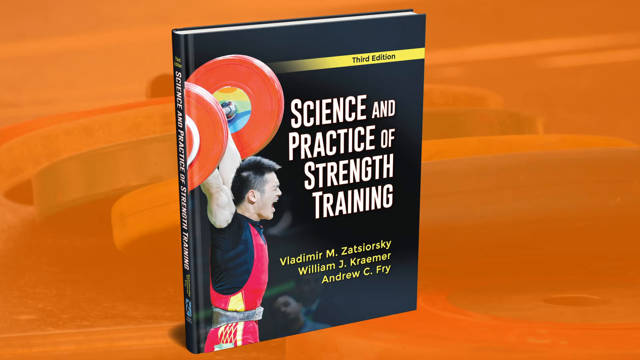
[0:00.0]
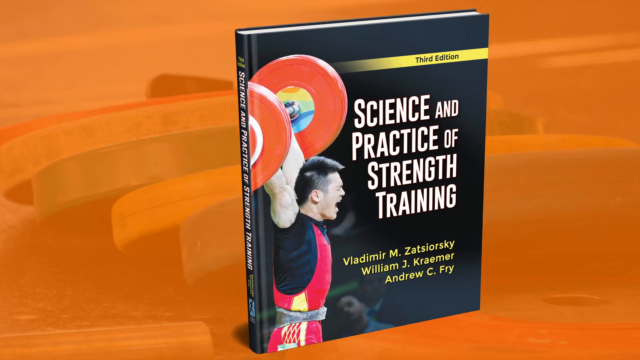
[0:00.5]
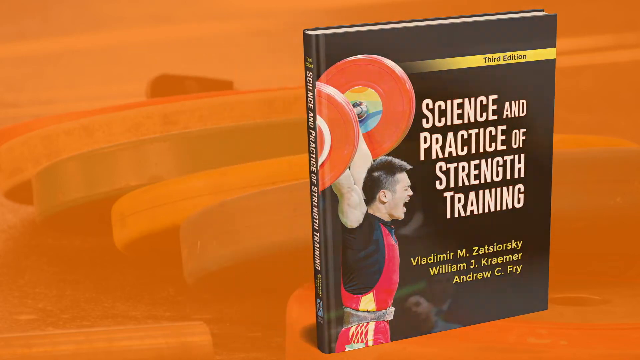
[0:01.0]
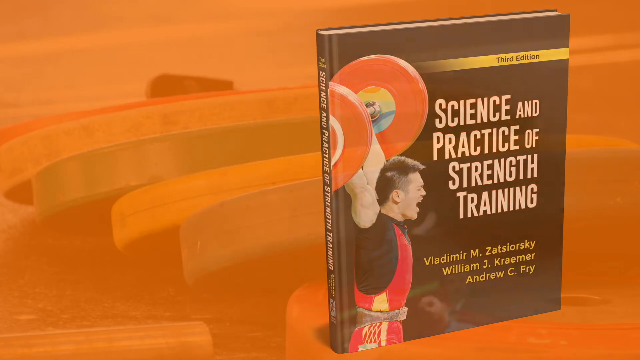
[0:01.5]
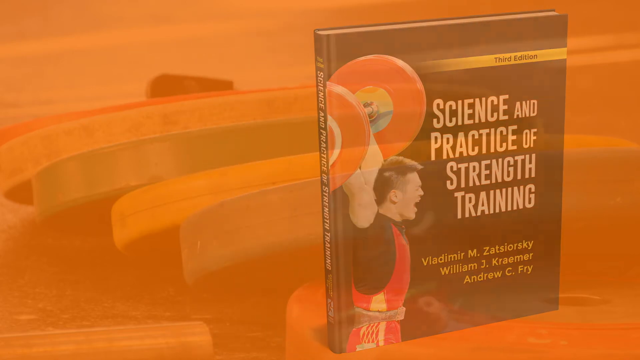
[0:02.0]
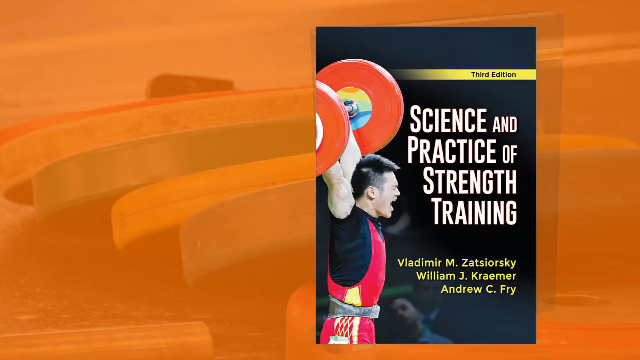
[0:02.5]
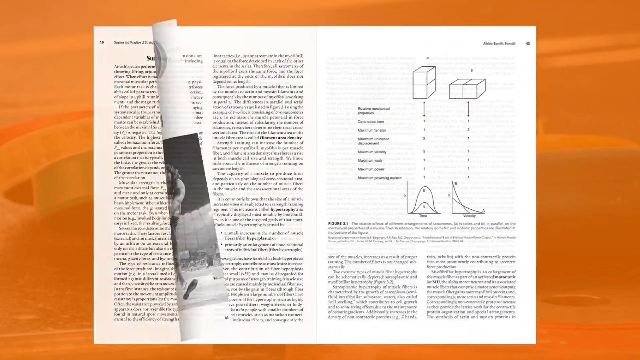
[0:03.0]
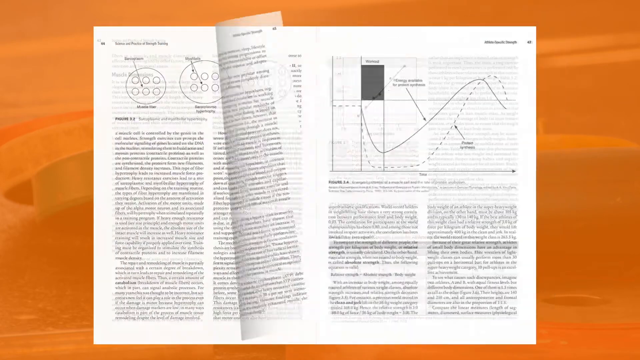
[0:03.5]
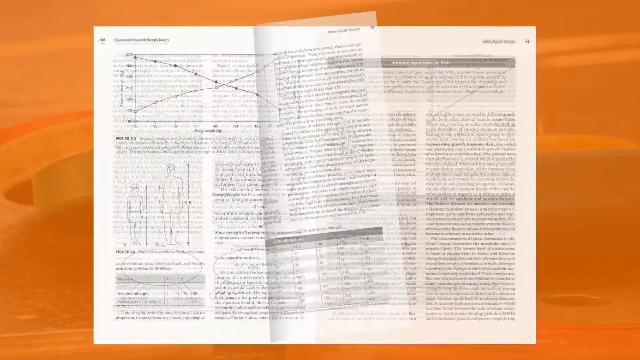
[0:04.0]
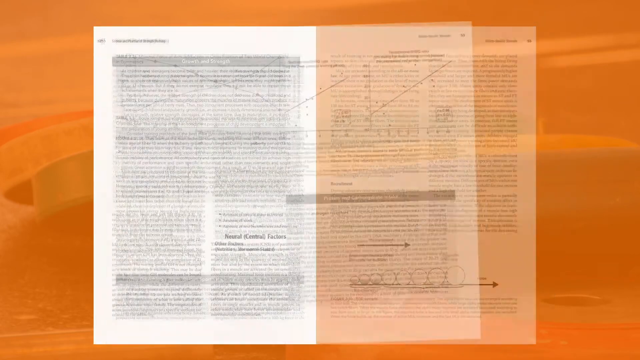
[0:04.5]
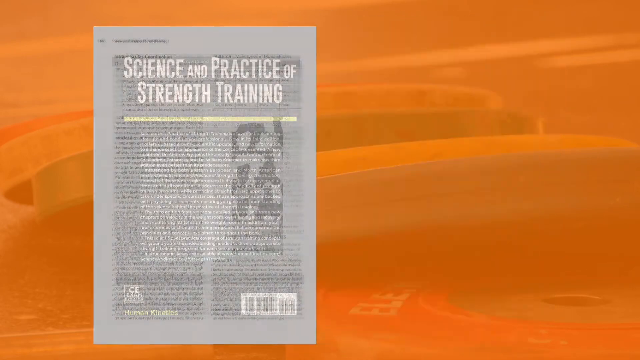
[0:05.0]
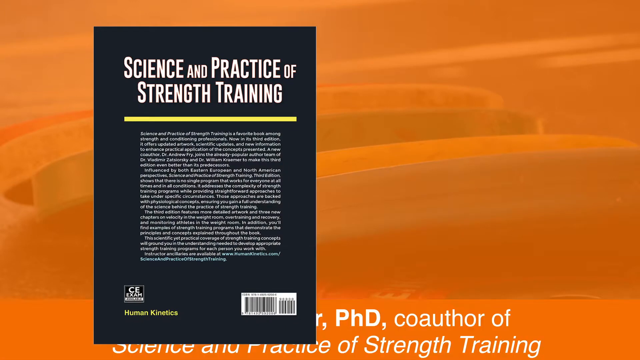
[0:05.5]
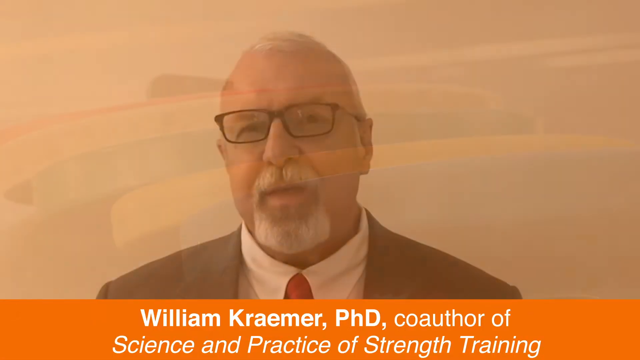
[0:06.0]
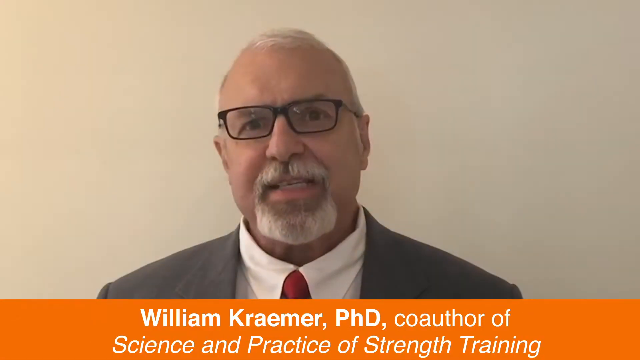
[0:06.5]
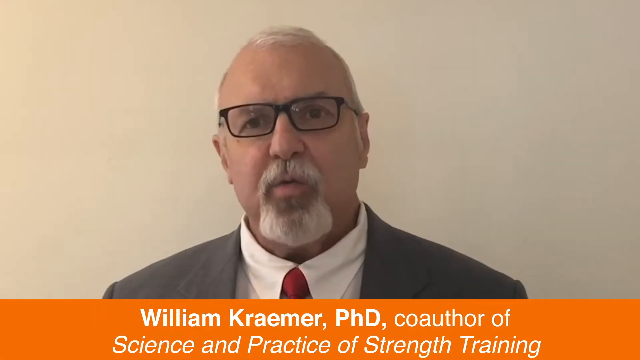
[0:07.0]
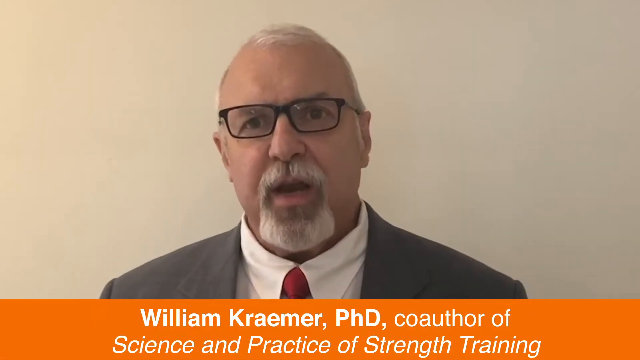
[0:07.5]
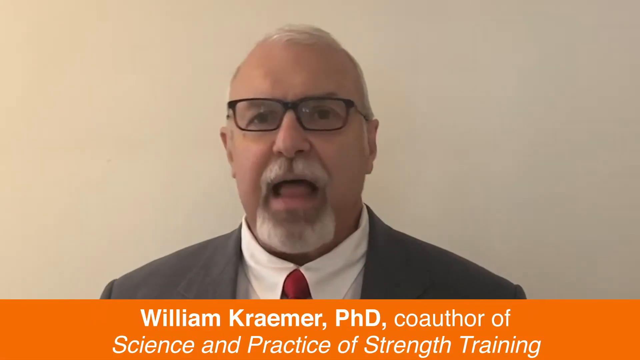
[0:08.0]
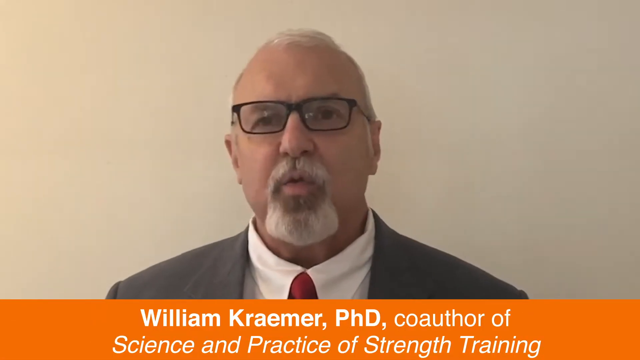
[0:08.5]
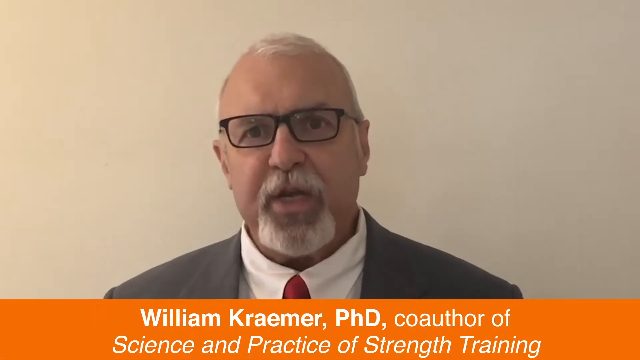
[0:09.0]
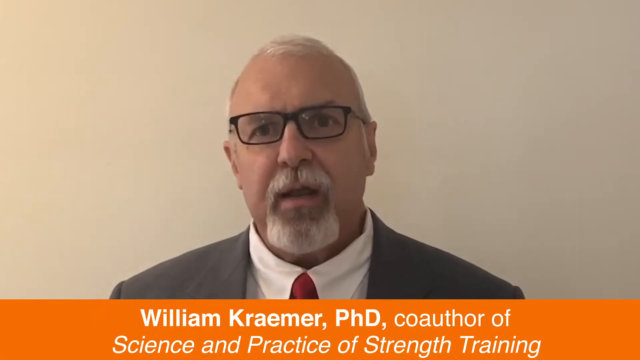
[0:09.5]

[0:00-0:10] The front of a black book reads "Science and Practice of Strength Training" in white. On the left is a sort of image of a man, kind of in profile, lifting a giant barbell with big orange ends, and the names of the authors appear in yellow at the bottom. The book kind of moves toward the right in a sort of presentation, kind of becomes clear and sort of fades out, and then it kind of opens up to show the inside, with white pages full of text, the pages kind of moving toward the left. The back of the book is shown too; it is also black and reads "Science and Practice of Strength Training," set against a sort of orange background. The scene then transitions to a man with glasses and a beard, wearing a gray suit, a white shirt and a red tie. In an orange area at the bottom, text reads "William Kramer, Ph.D., co-author of Science and Practice of Strength Training."